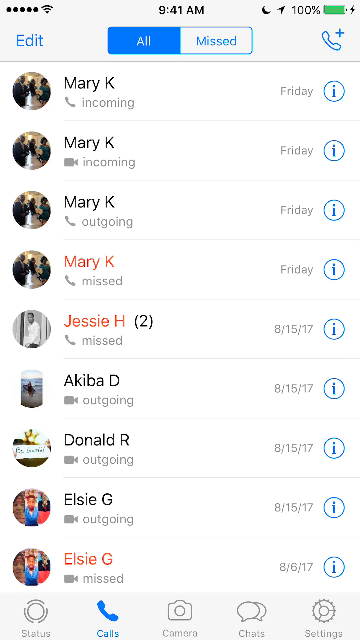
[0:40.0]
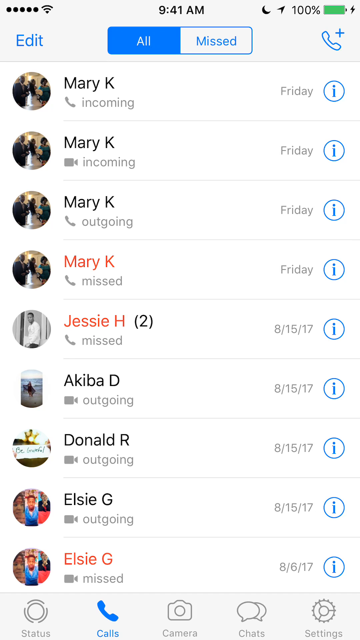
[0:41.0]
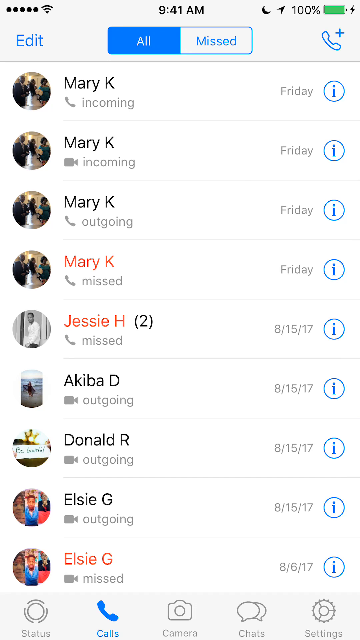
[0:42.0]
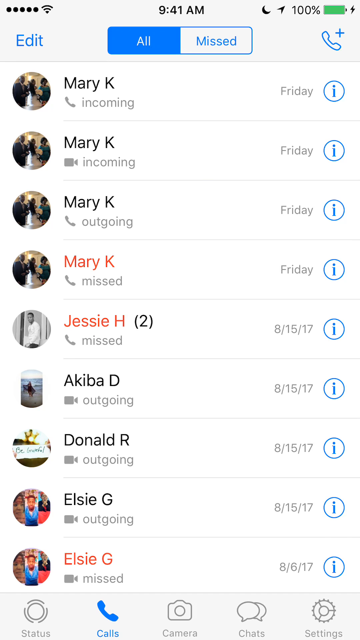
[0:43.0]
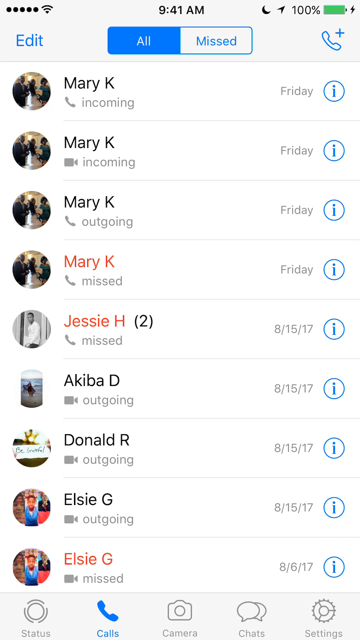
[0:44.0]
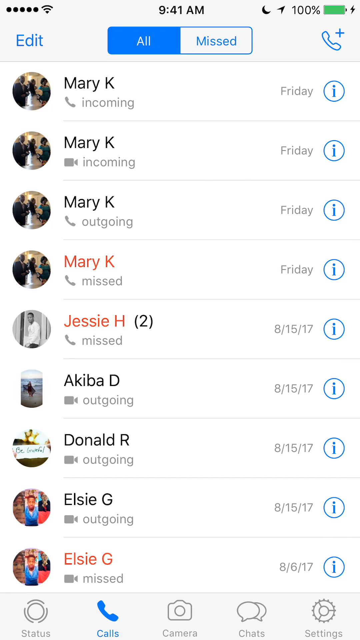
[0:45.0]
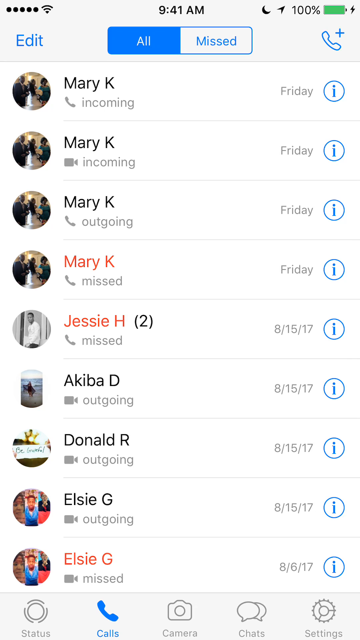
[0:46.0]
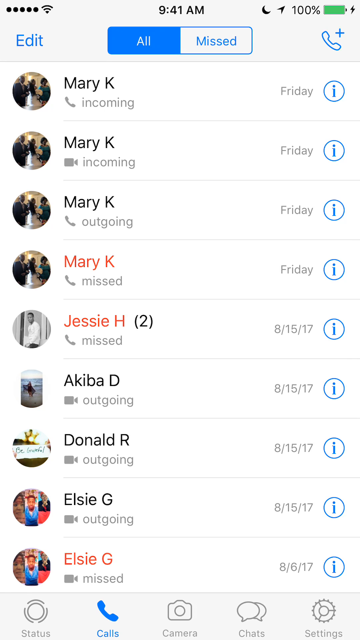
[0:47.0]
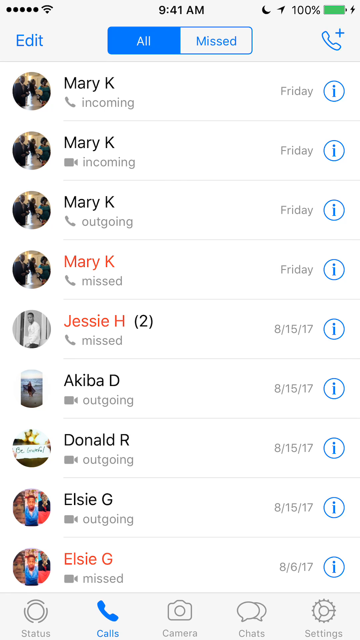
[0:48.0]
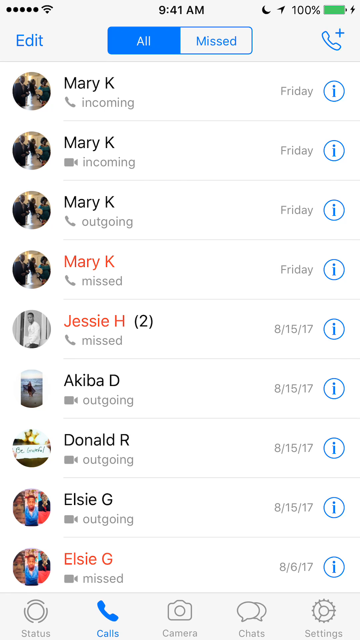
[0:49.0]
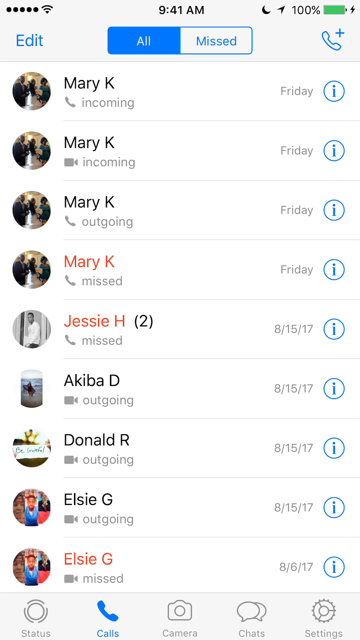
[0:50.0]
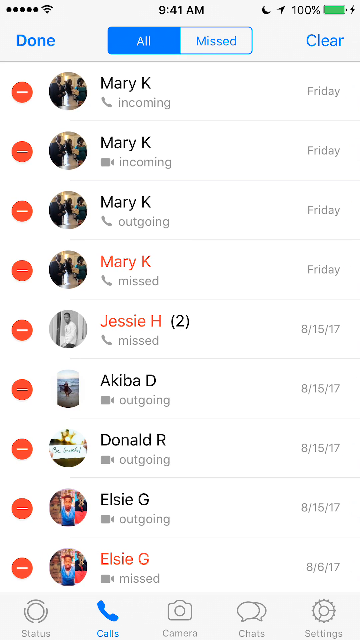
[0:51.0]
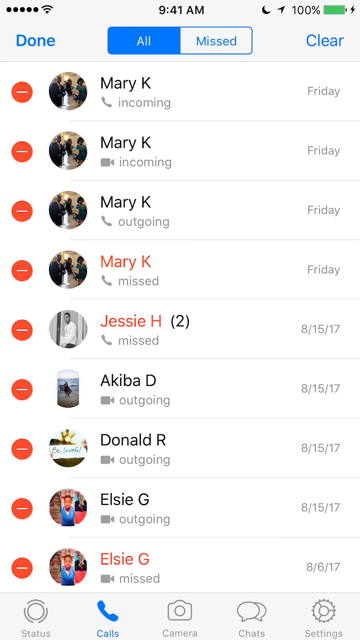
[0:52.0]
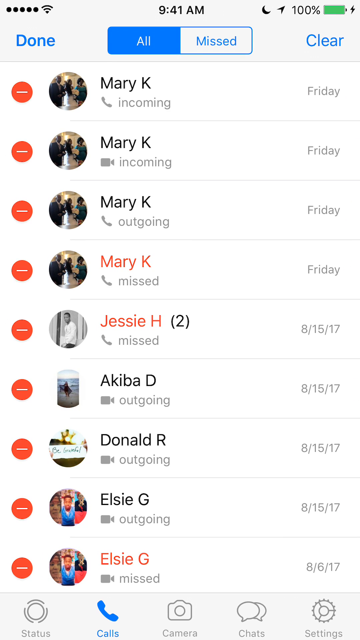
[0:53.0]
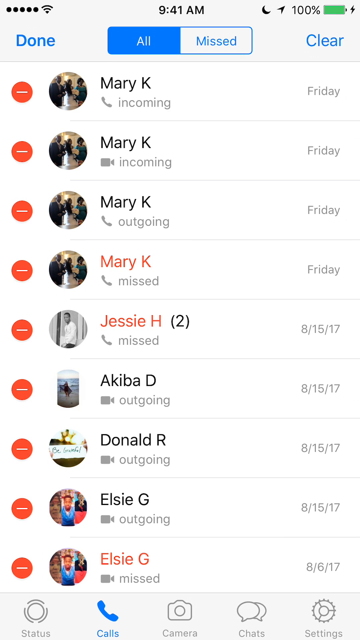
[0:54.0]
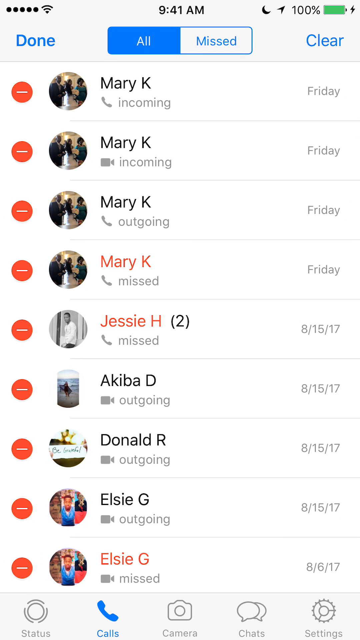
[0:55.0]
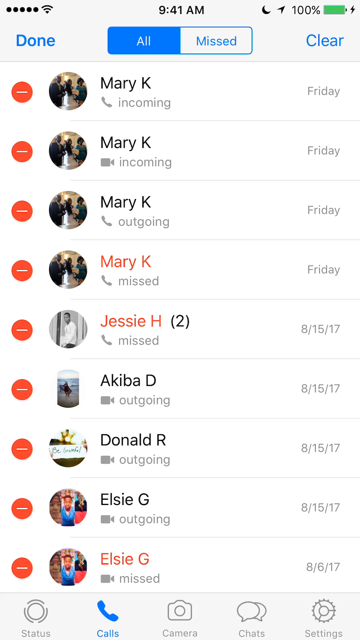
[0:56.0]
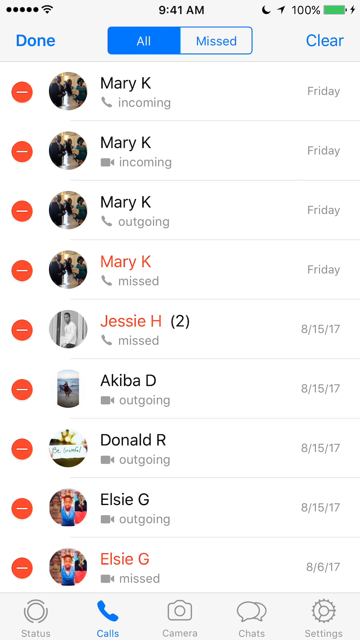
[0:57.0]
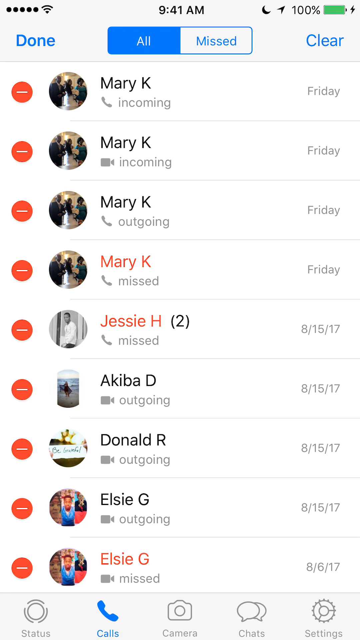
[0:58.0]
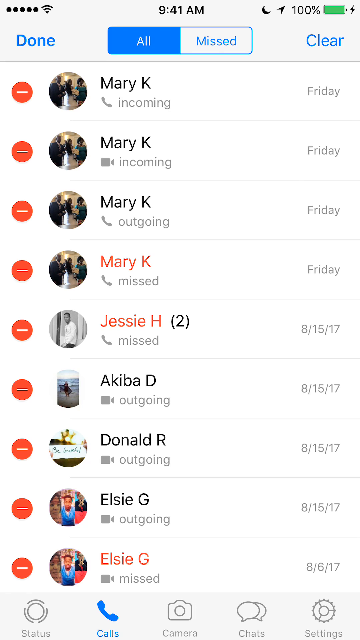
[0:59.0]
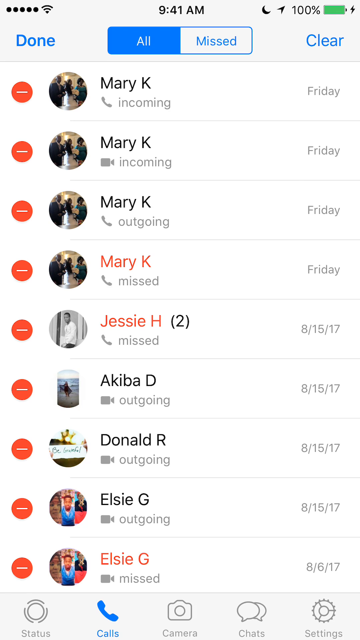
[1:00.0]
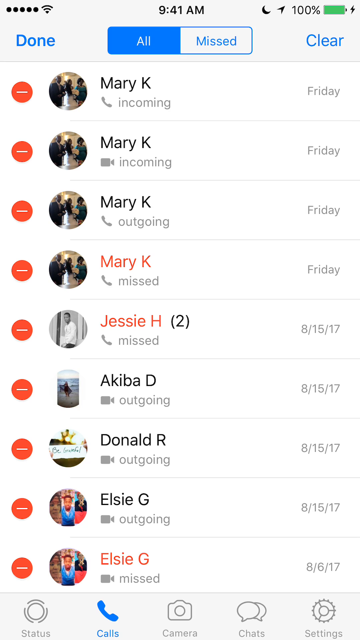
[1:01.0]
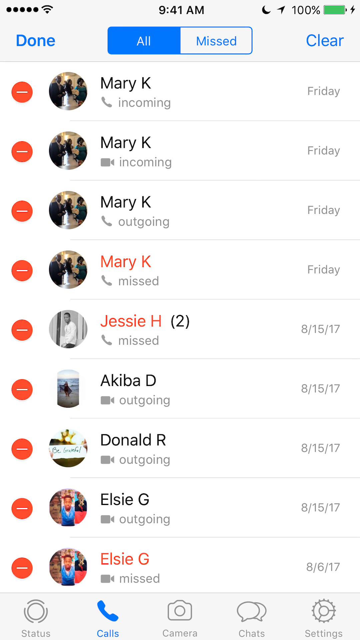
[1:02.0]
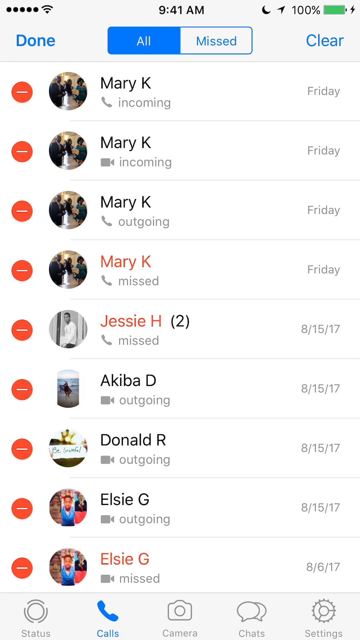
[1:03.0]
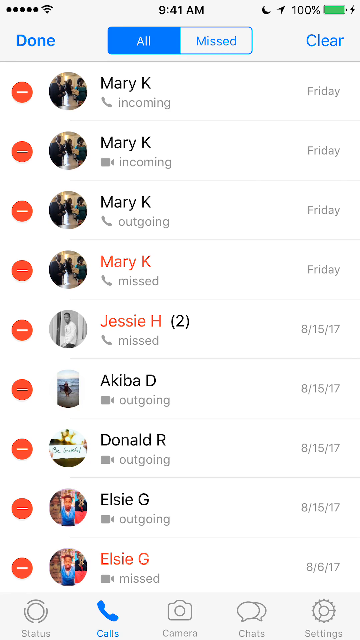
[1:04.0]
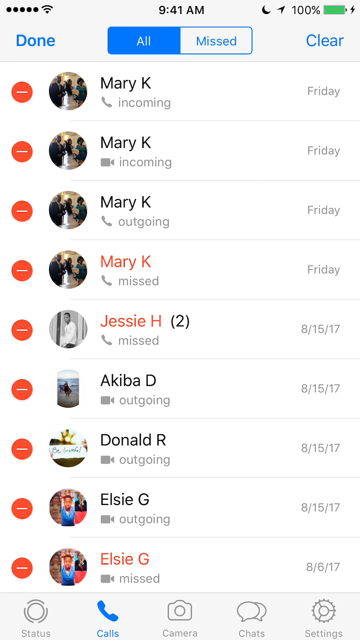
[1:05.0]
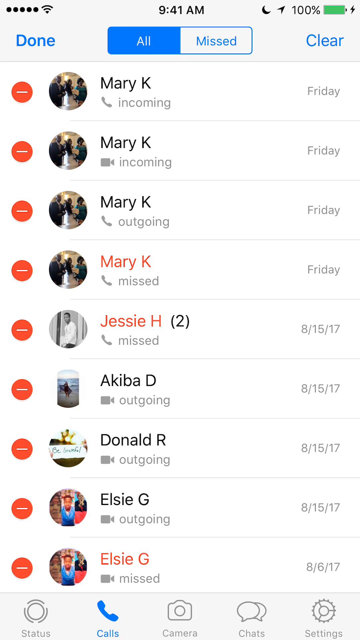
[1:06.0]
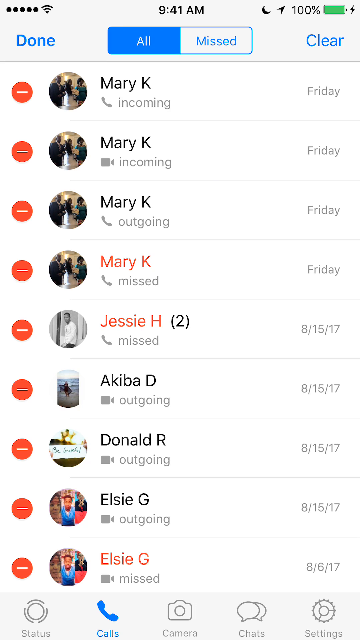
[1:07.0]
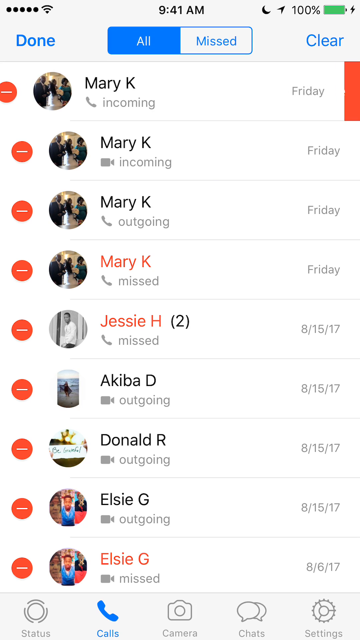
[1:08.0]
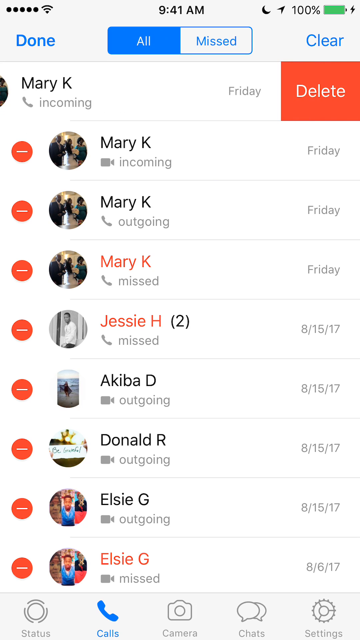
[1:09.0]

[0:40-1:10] The screen of an iPhone shows what appear to be call logs. The word "Edit" is in the top left; in the center is a blue rectangle reading "All", and on the right a white rectangle reading "Missed". Below is a list of names, each with a picture to the left. The first four entries are for Mary K, followed by Jesse H, Akiba D, Donald R, Elsie G, and a second Elsie G. On the right side are days and dates: days and dates beside Mary K's entries, the word Friday to the right of Jesse H's entry along with August 15, 2017 in numbers, 8-15-17 beside Akiba D, Donald R and the first Elsie G, and 8-6-17 beside the last Elsie G. Under each name the call is labeled incoming, outgoing or missed. Mary K's fourth entry is missed and her name is red. Jesse H's name is red, with "missed" underneath and a parenthesis containing the number 2 to the right of the name. At the bottom, Elsie G's name is in red with "missed" below it. Icons run along the bottom of the screen: a drawing of a camera in the center, a blue phone to its left, two messaging bubbles to its right, a drawing of a wheel or cog further right, and on the far left a drawing of what looks like a circular light bulb with "status" underneath. After several seconds, a red circle with a horizontal white line through it appears to the left of each entry, and the screen stays like this for several seconds.